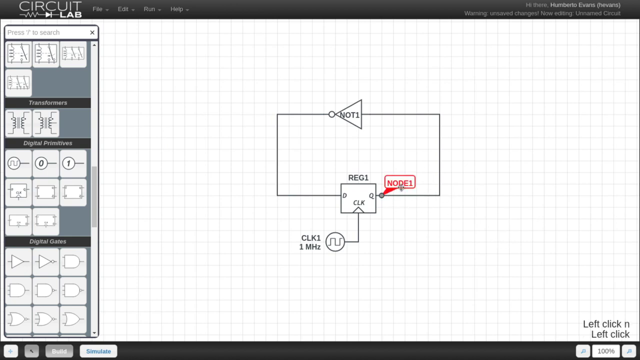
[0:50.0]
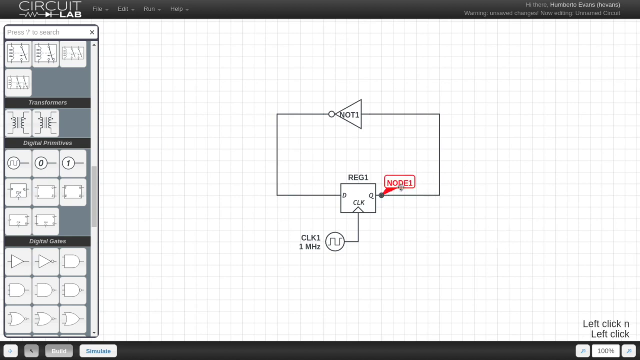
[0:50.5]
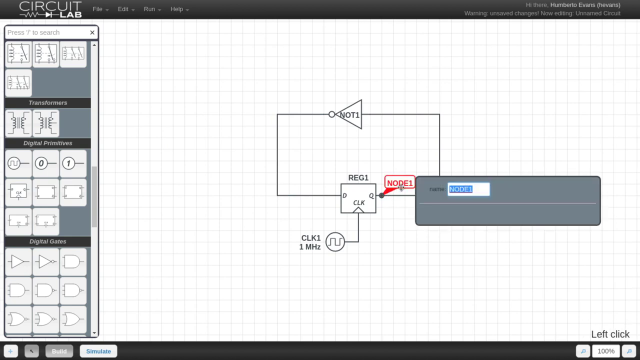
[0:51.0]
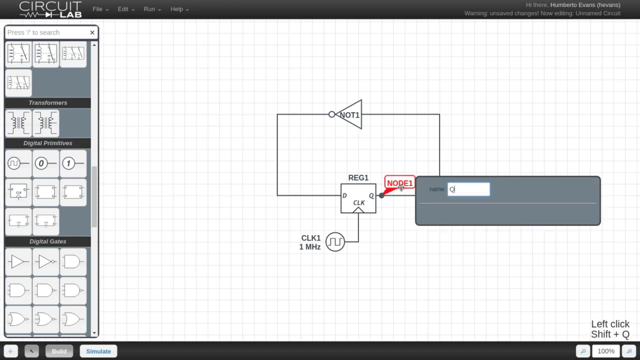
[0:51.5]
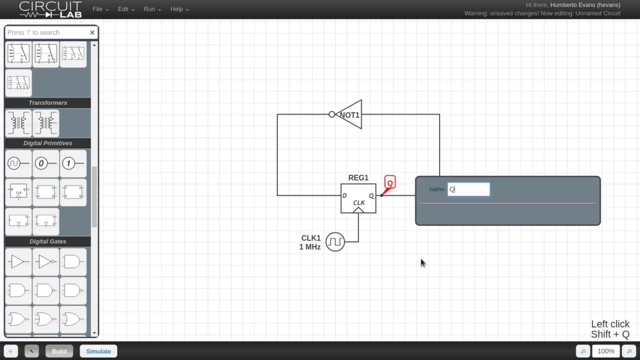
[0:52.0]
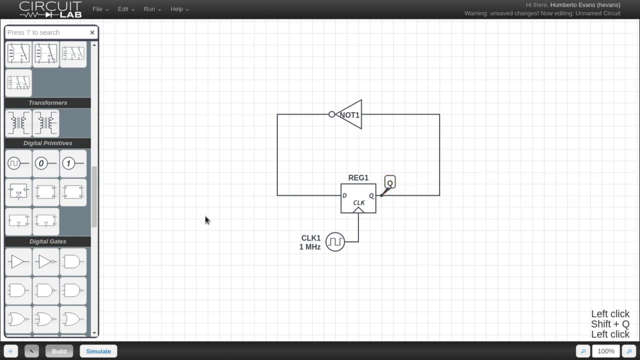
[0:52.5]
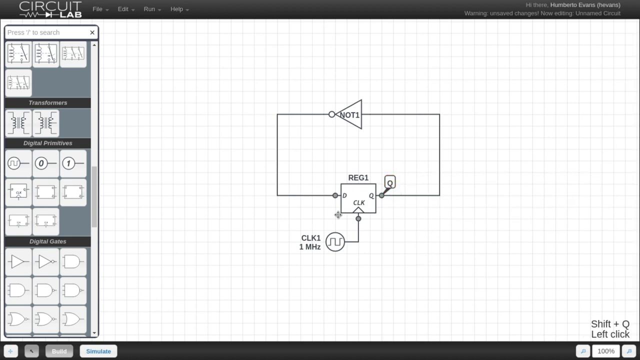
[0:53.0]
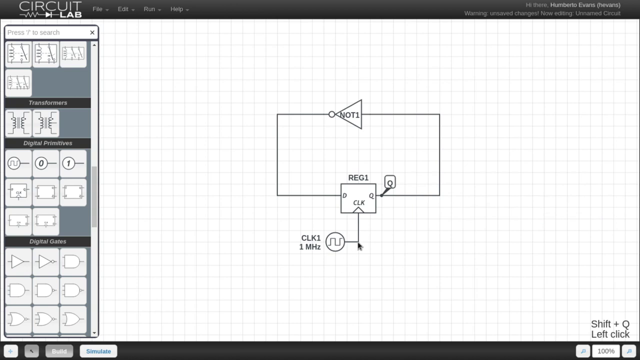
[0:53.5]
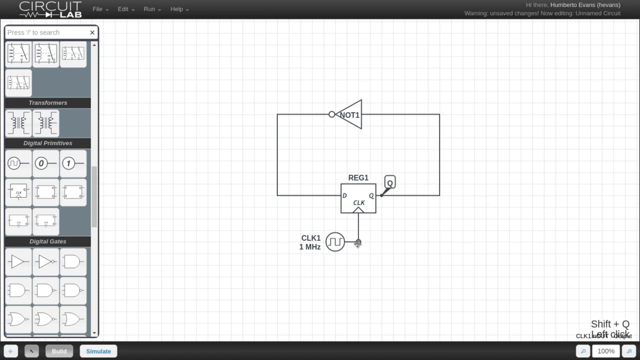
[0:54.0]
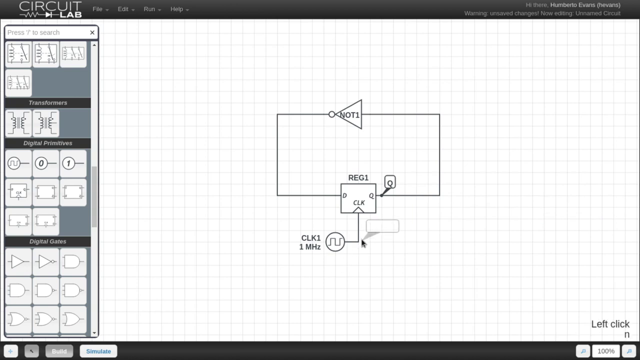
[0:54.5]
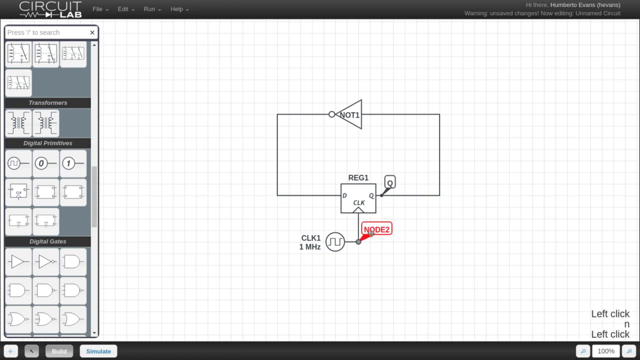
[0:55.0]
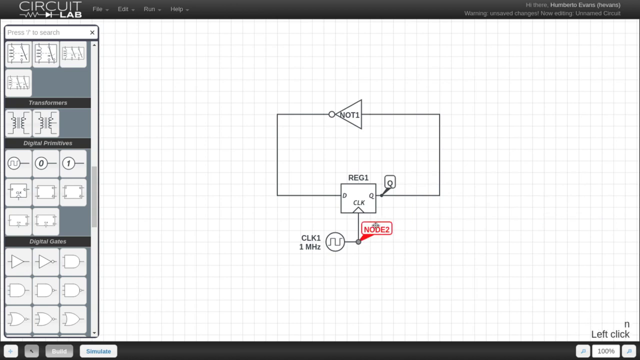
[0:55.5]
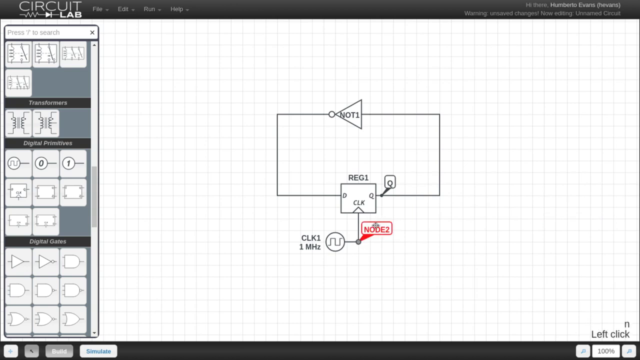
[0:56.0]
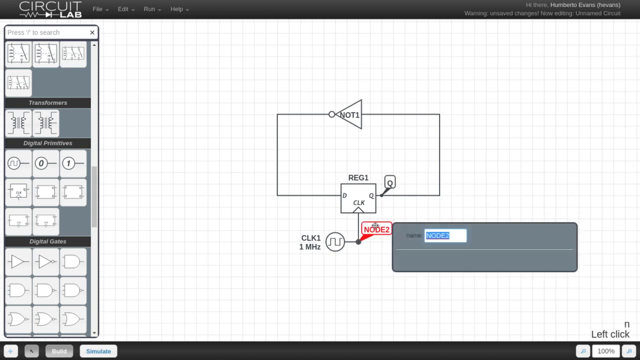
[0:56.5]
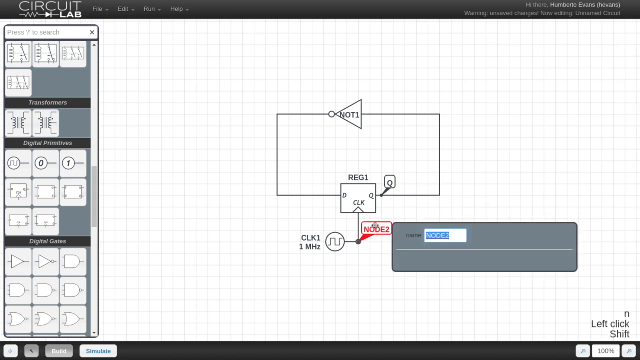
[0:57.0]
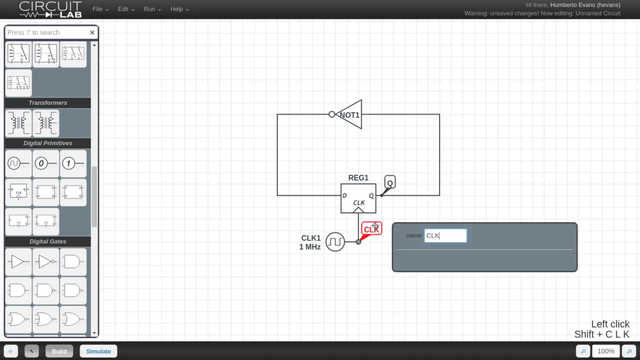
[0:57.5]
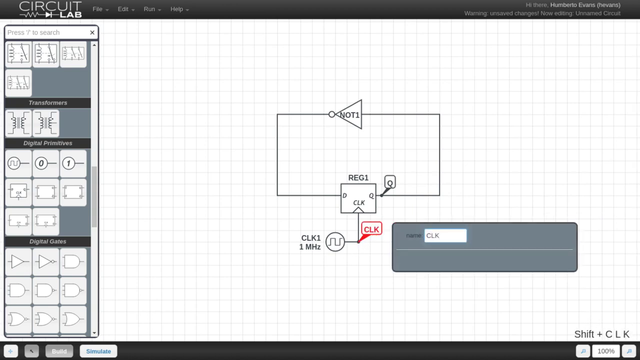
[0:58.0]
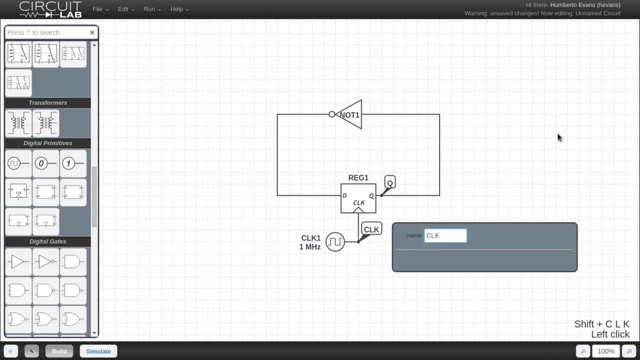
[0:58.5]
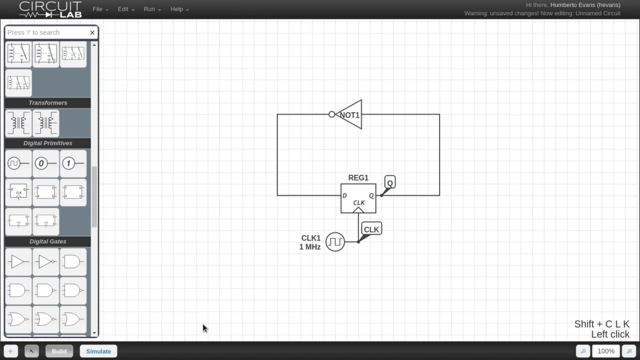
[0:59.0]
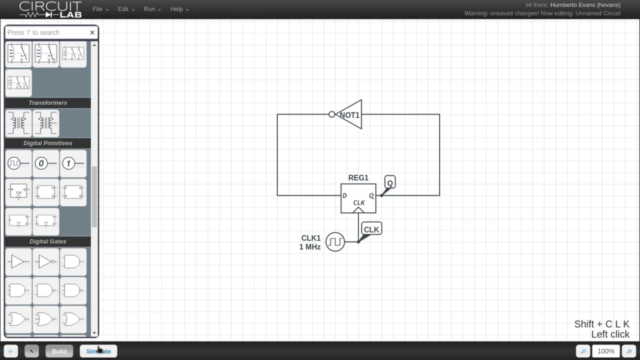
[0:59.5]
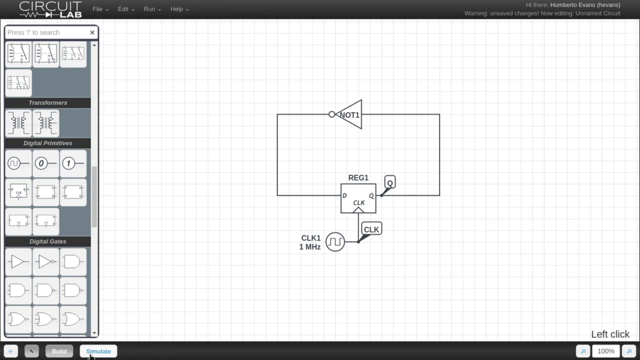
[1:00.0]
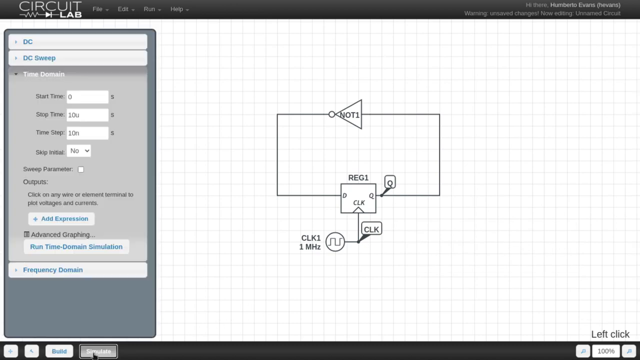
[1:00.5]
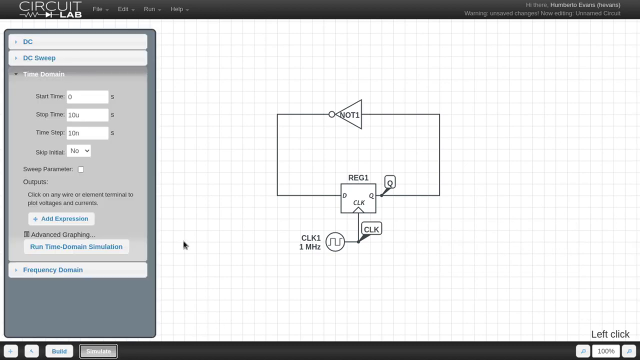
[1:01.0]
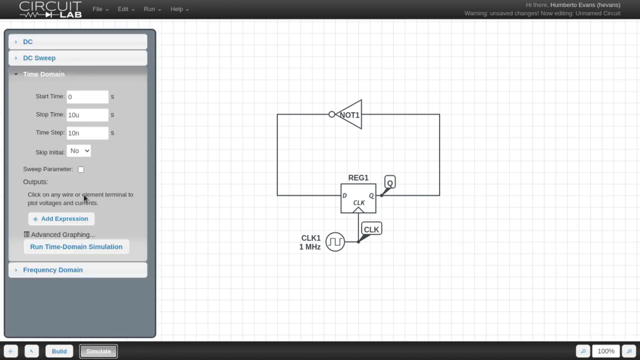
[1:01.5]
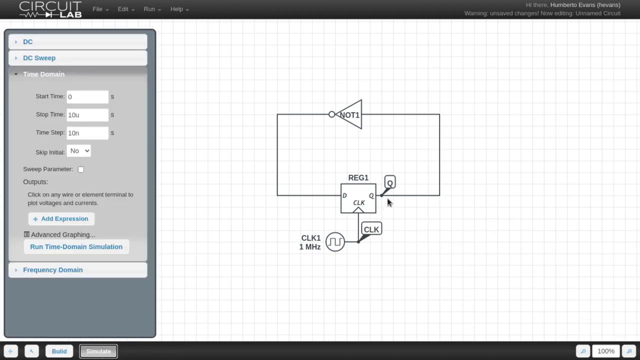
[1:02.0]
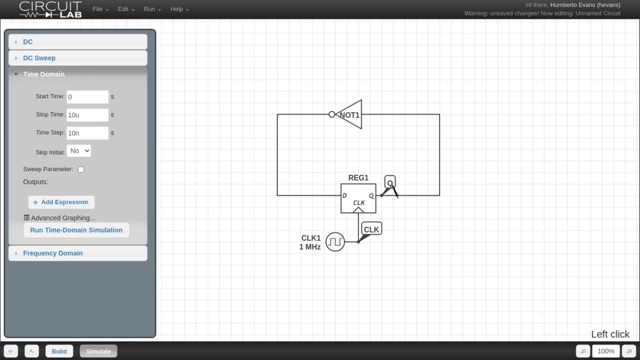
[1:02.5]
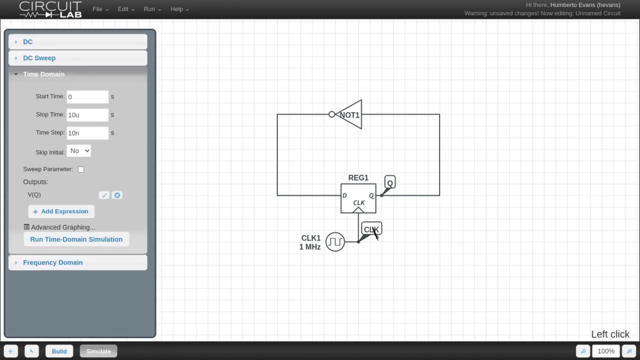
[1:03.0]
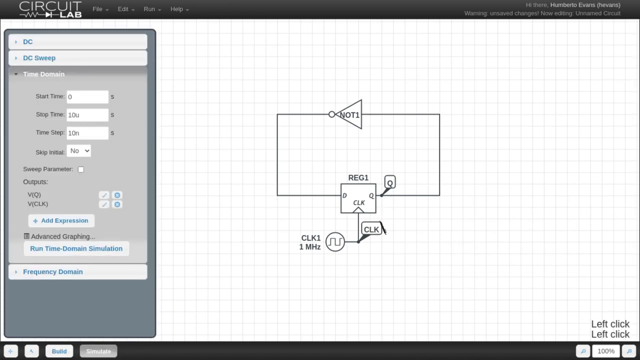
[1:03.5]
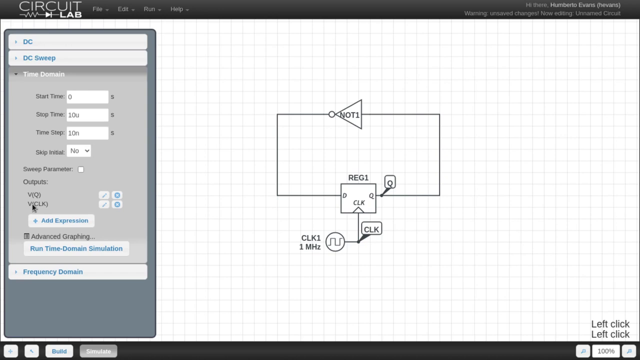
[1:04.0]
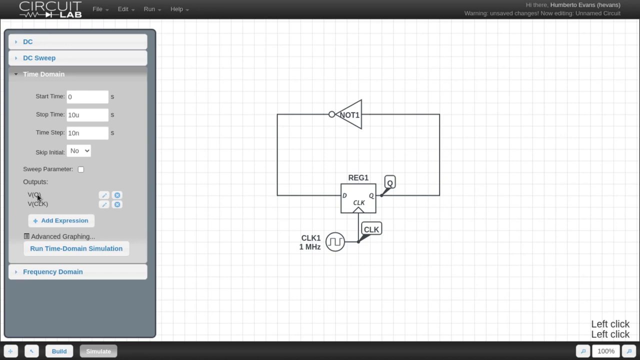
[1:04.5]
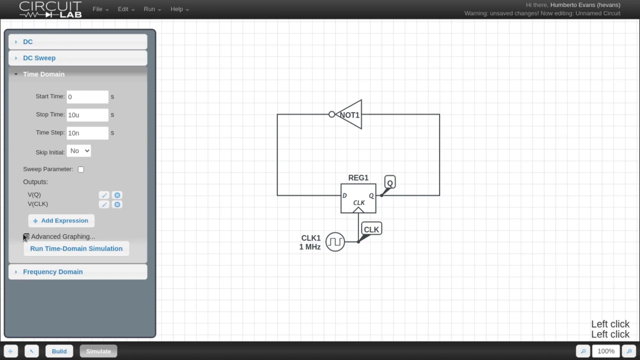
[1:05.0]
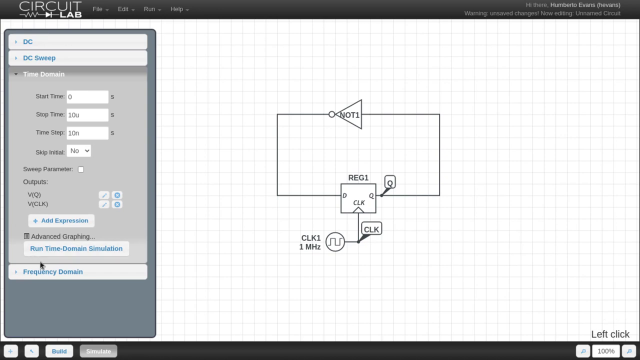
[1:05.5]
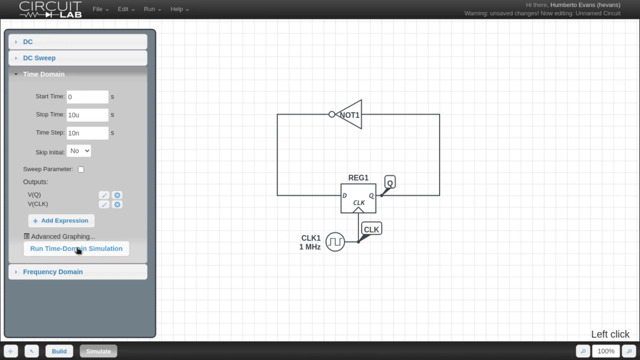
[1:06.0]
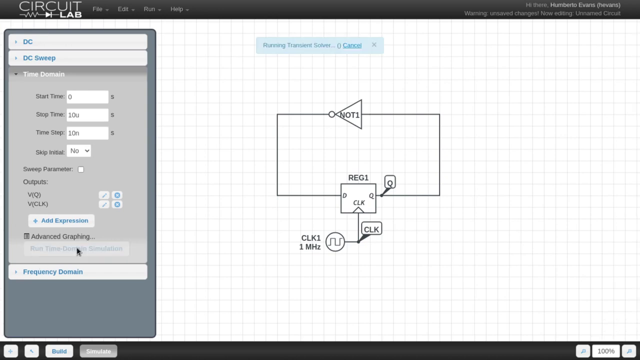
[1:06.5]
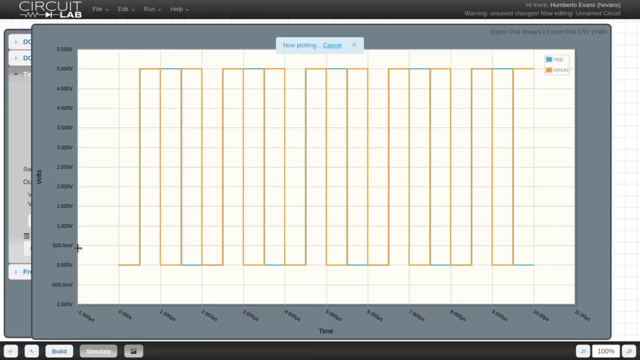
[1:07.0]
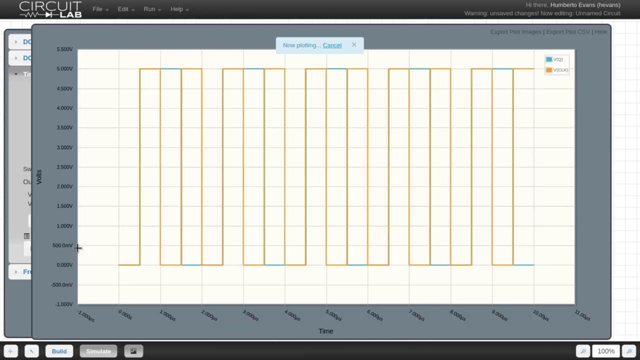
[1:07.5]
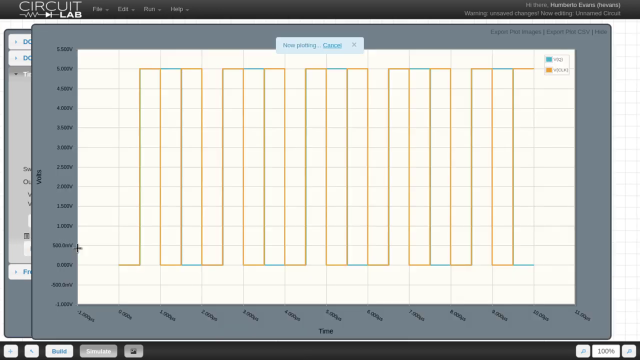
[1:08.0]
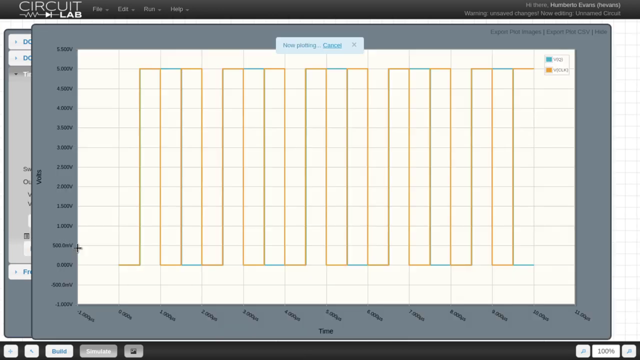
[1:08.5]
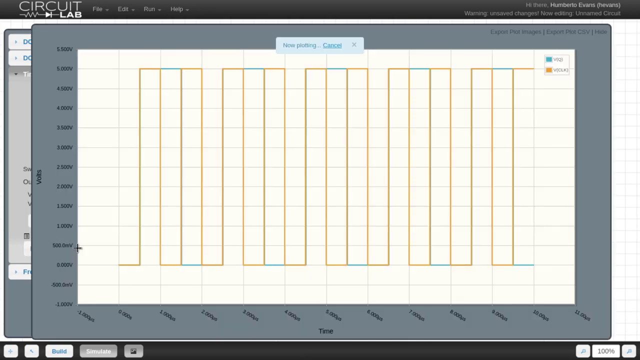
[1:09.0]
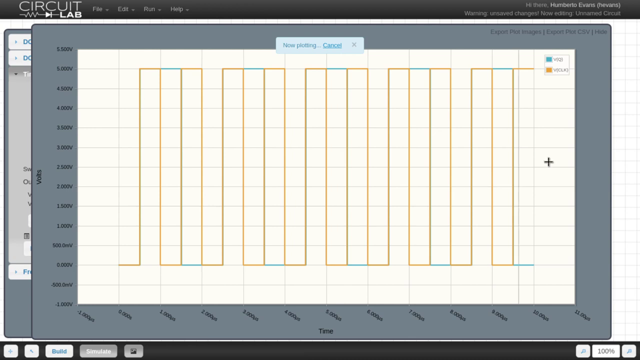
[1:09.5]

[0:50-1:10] A screencast of the program CircuitLabs shows the user adding new elements to the canvas and changing the names of the circuit and all of its elements. In the right corner, a display shows what the user is doing, such as which key is pressed or what kind of click is made. After the names are changed, a new tab opens on the left side with a lot of information about the circuit, and the user adds new information and parameters. The user then runs what appears to be a simulation, and a new image appears, apparently of the simulation, giving parameters and information about how the diagram would work in real life.